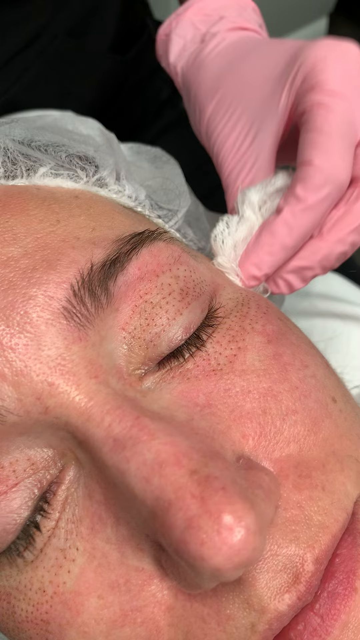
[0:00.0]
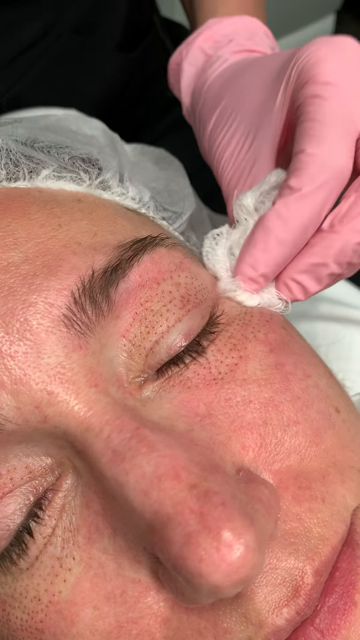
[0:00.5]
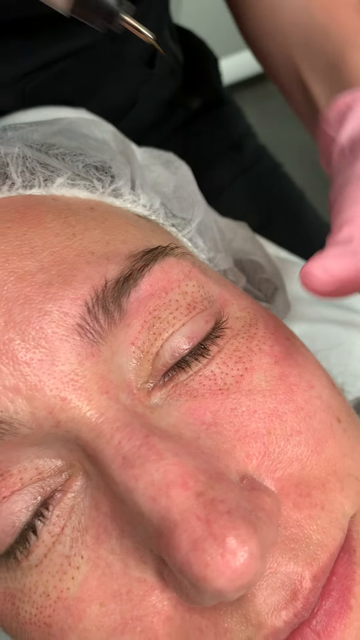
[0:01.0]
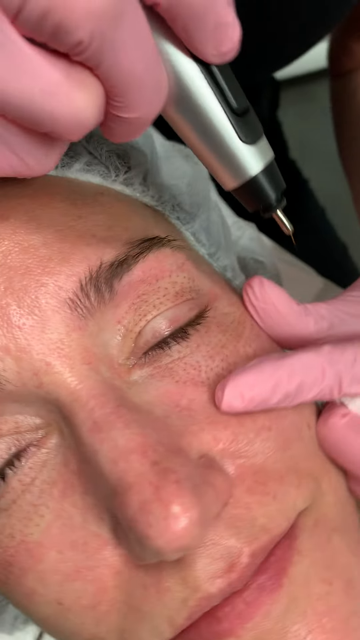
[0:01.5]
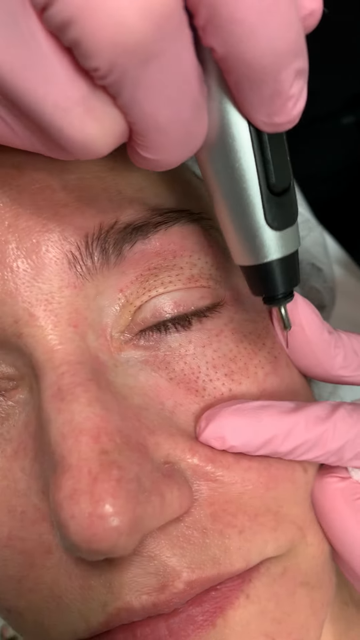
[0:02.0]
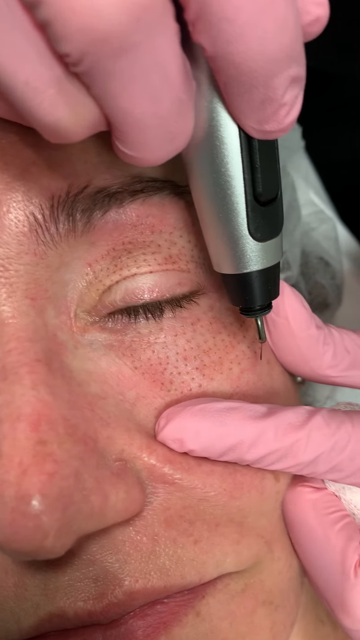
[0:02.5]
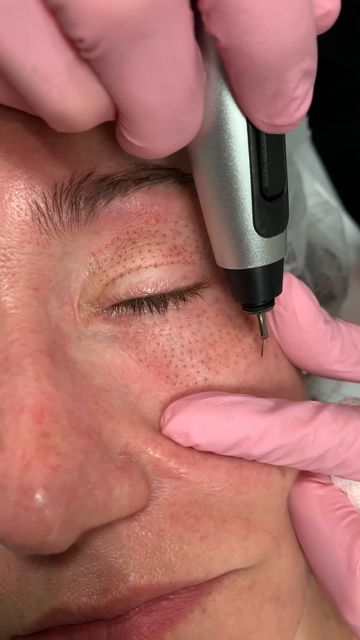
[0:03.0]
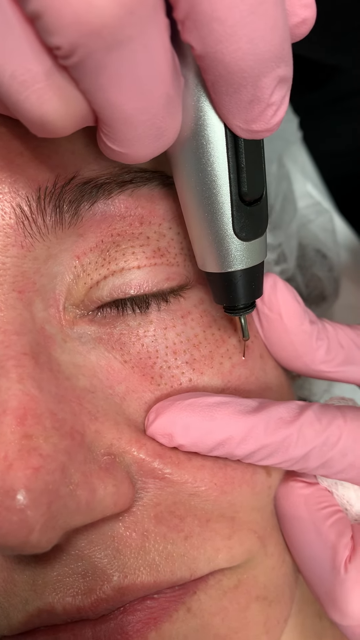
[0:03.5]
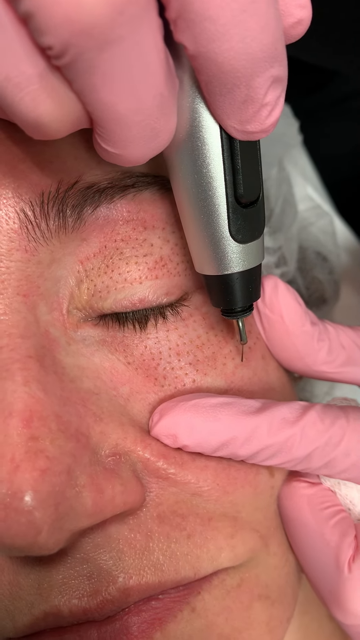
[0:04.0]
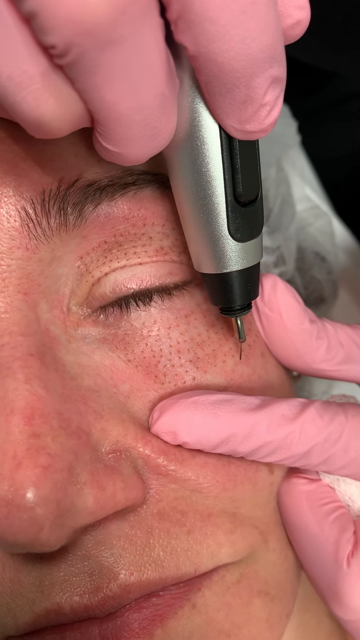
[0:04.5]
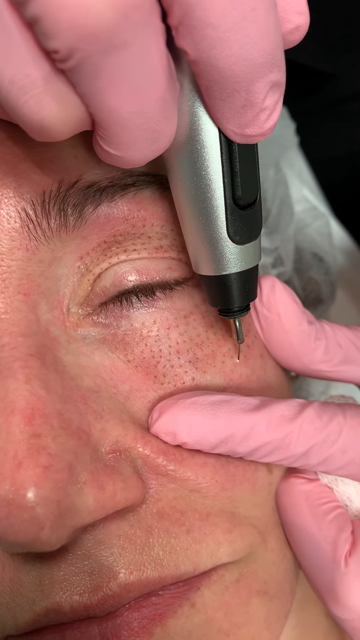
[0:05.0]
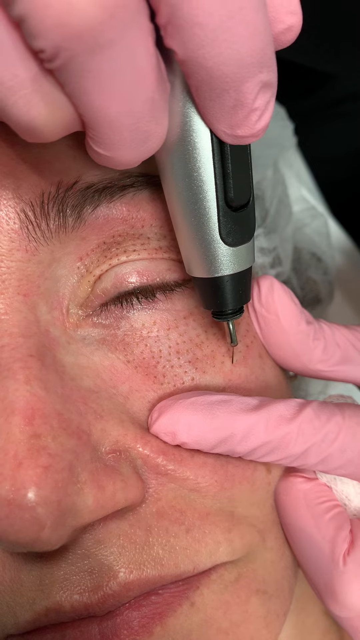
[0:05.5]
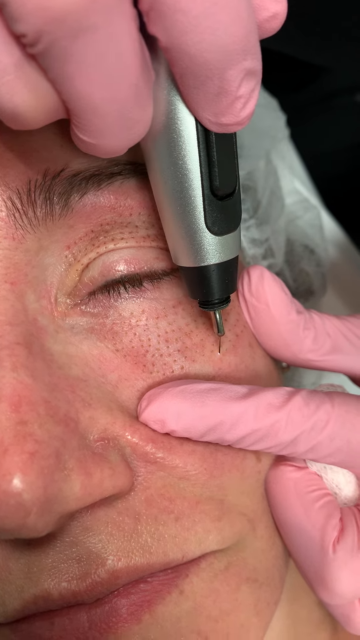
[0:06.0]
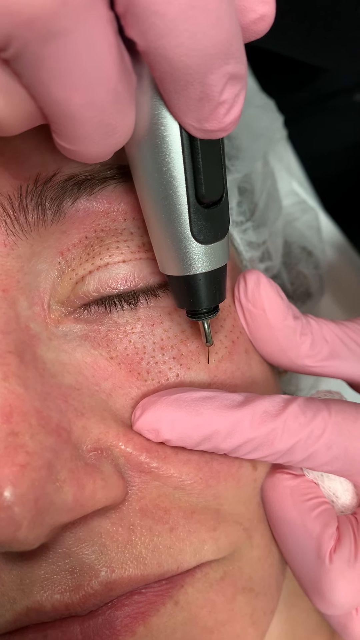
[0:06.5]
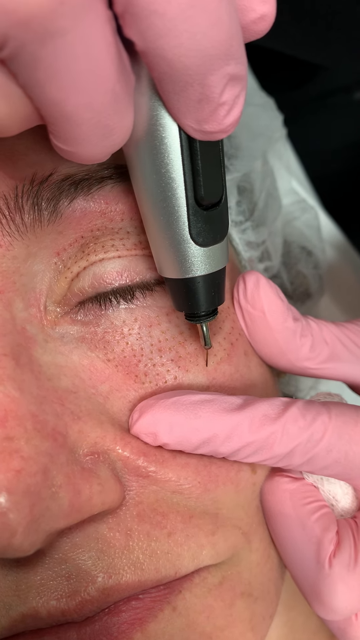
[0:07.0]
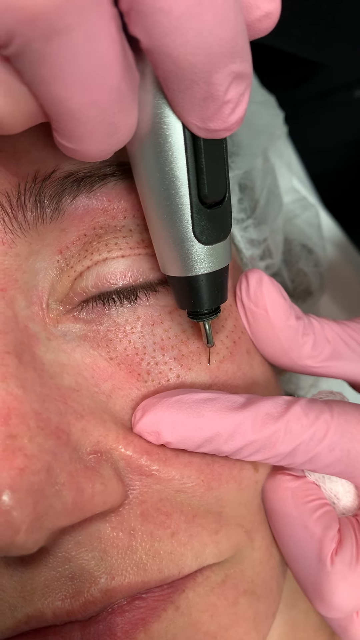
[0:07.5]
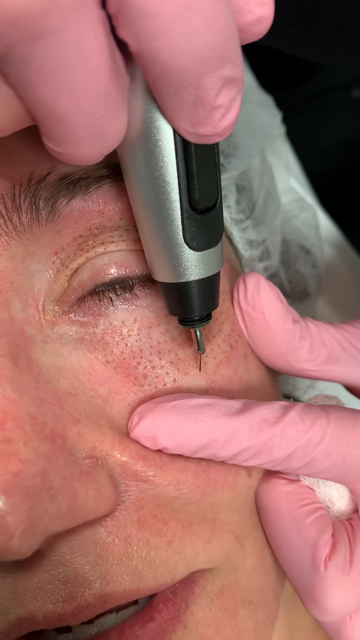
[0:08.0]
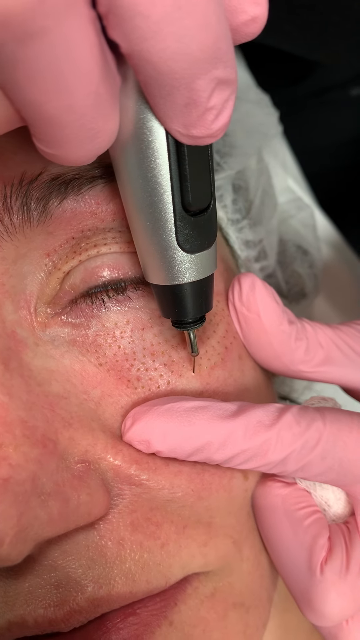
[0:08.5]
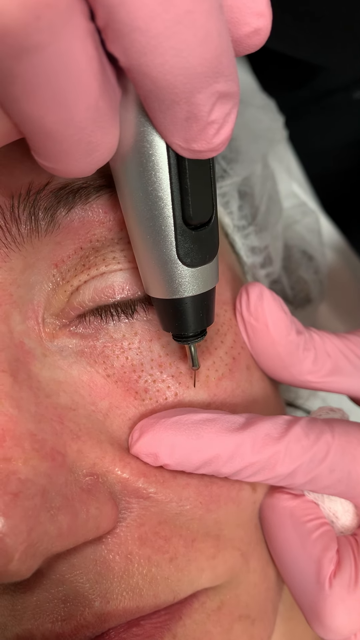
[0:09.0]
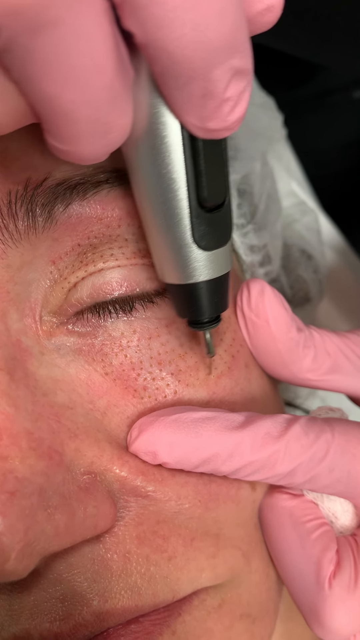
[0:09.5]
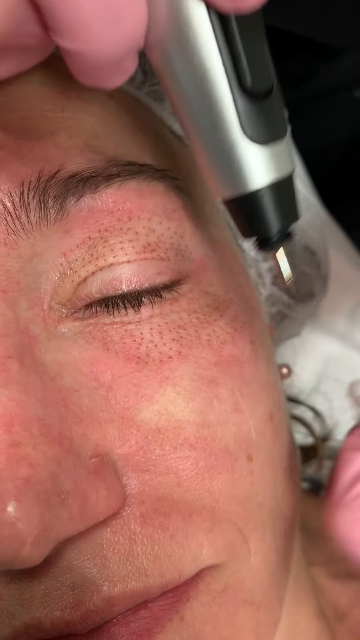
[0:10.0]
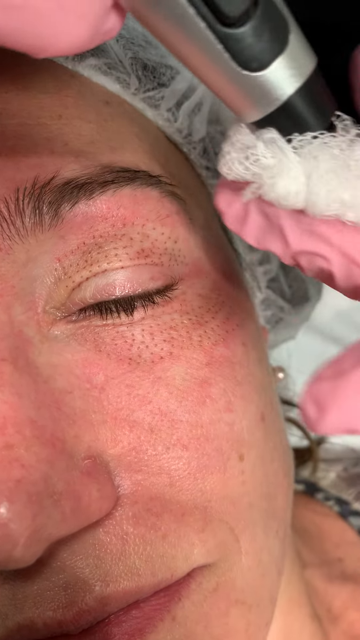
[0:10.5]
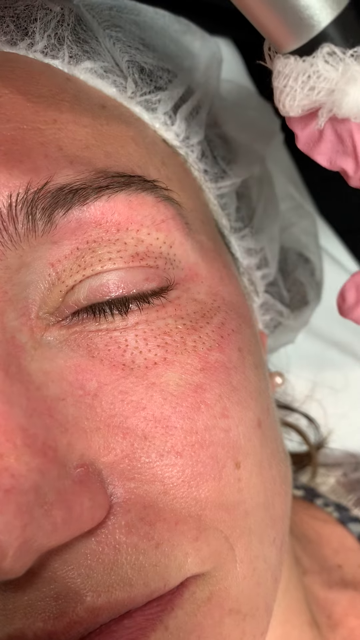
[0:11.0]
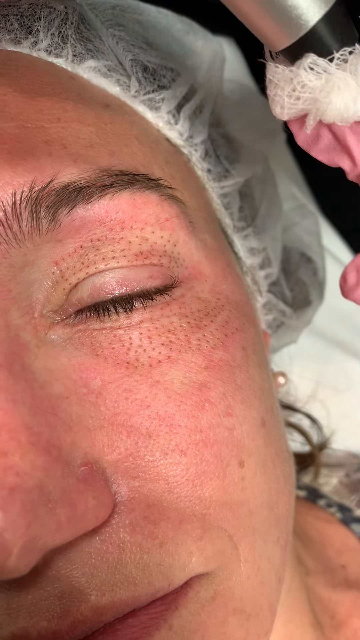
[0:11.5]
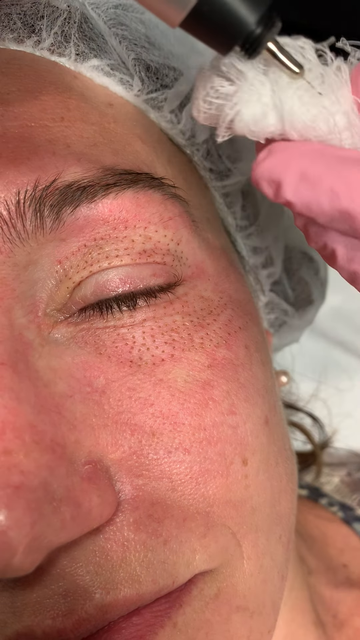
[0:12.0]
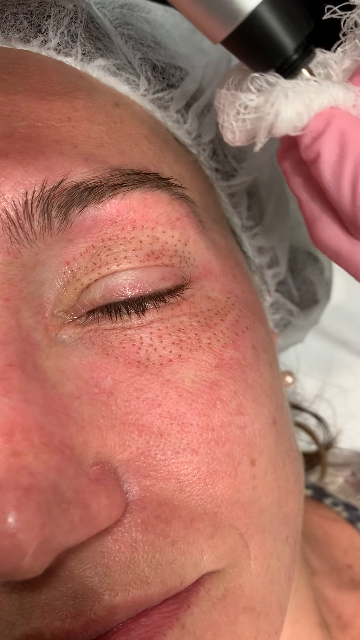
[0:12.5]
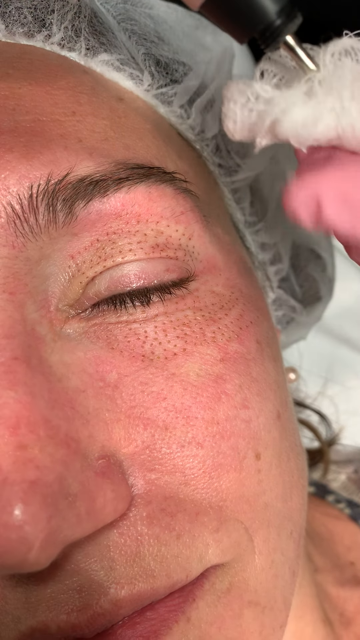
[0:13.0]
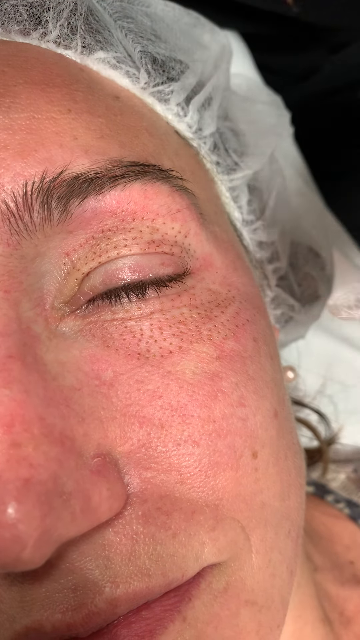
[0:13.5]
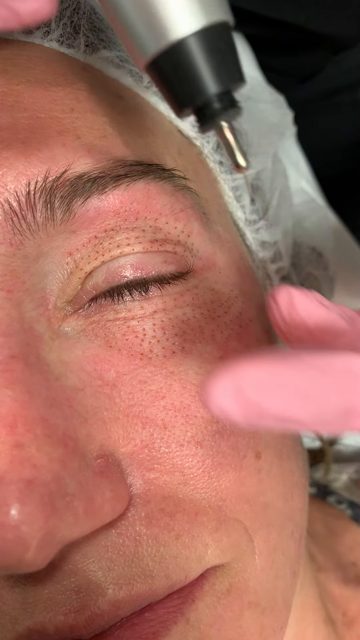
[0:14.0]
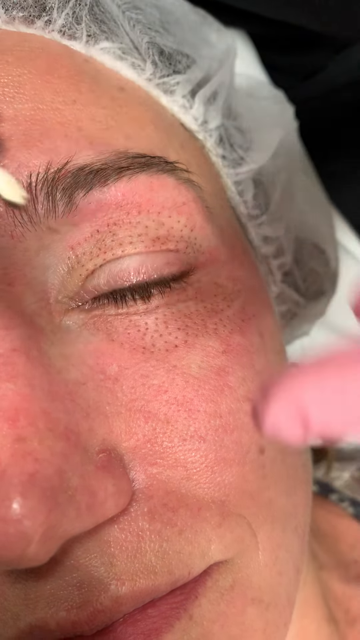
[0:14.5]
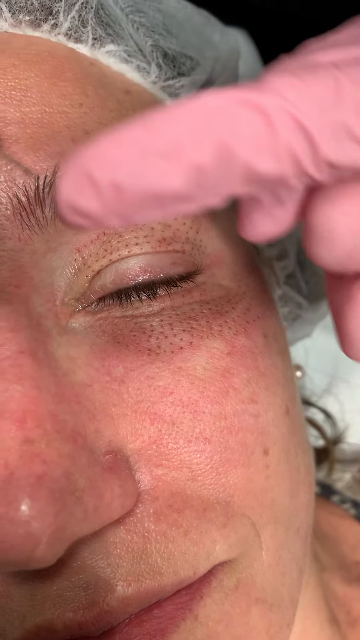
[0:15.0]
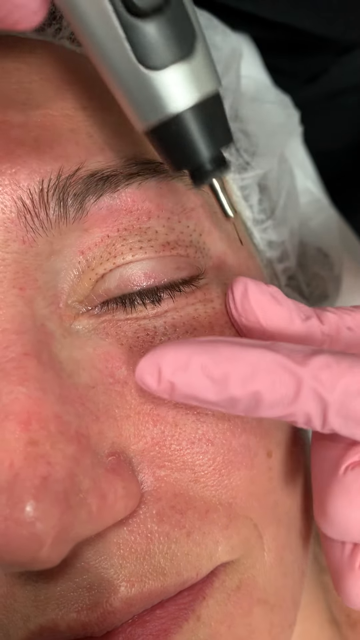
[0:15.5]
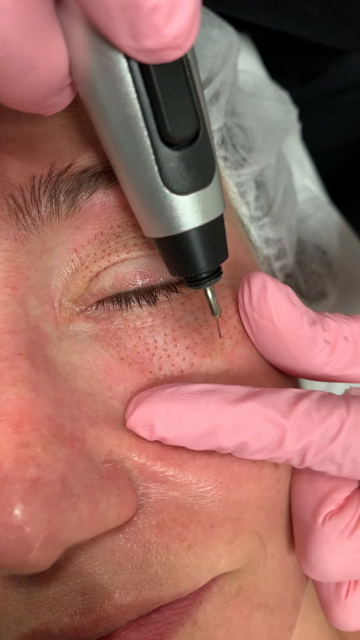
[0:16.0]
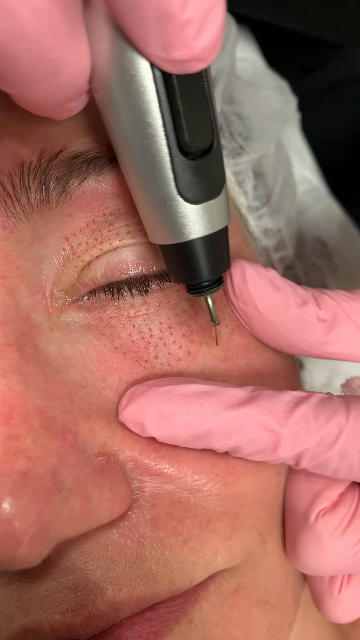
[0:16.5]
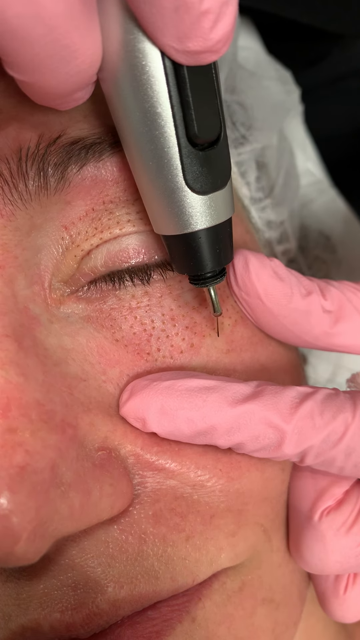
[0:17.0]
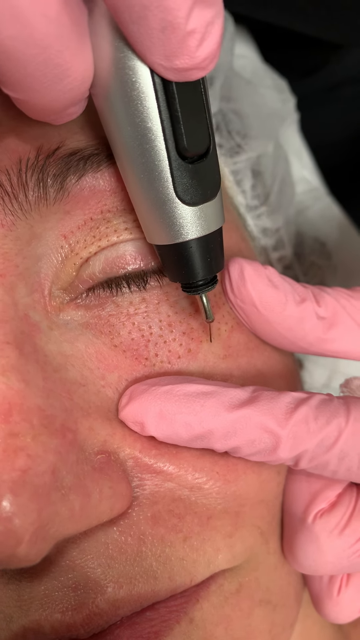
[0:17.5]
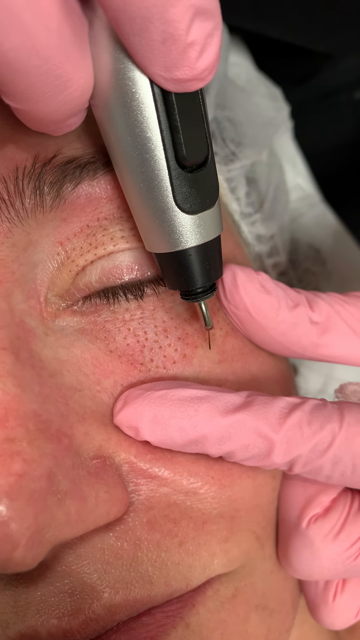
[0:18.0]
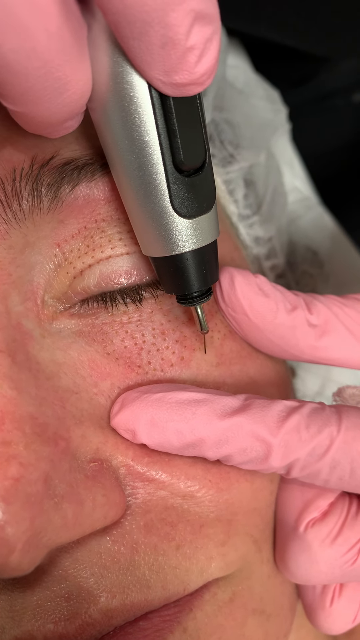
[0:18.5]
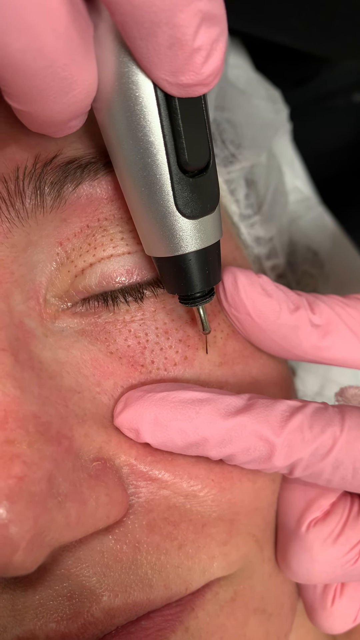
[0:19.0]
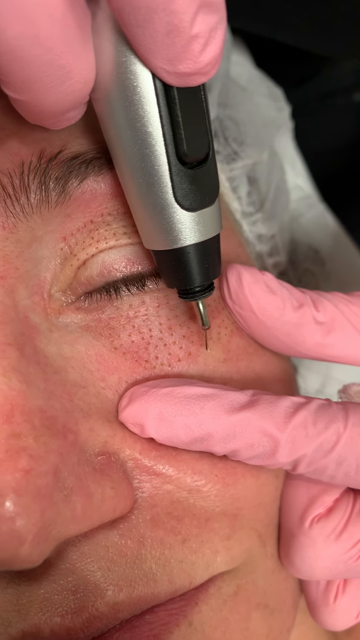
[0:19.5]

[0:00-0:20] An extreme close-up shows a woman's face: her closed eyes, her nose and most of her mouth, along with her left eyebrow and part of her forehead. She is wearing a surgical cap. Next to her, a left hand in a pink glove holds a tissue, which it dabs at the temple by the woman's left eye. A right hand then comes in, takes the skin by the woman's upper cheekbone at her left eye and pulls it back tautly. The right hand is now holding a metal device with a silver canister, a black end and a fine metal tip. The metal tip is applied to the skin underneath the woman's left eye. She keeps her eyes closed and murmurs something. The person lifts the metal tip away, wipes it with a cloth, and resumes poking the woman beneath the eye. Brown dots are visible under the woman's eye and on her eyelid.